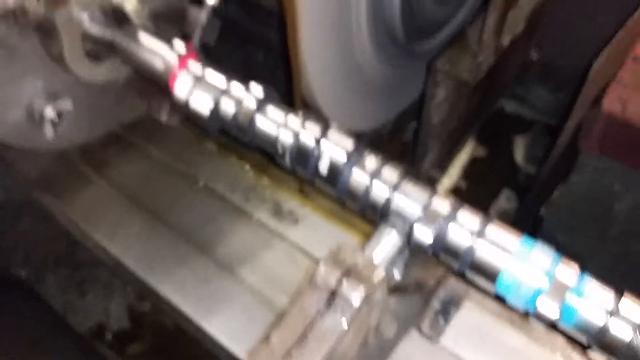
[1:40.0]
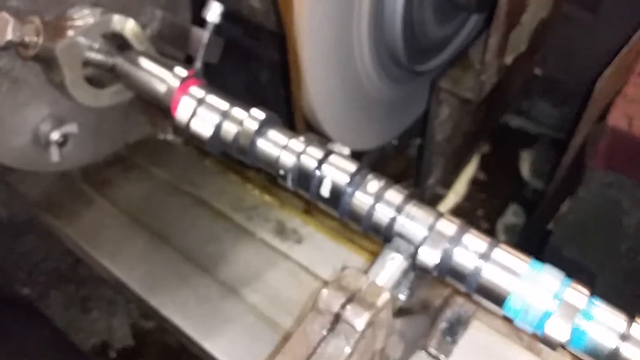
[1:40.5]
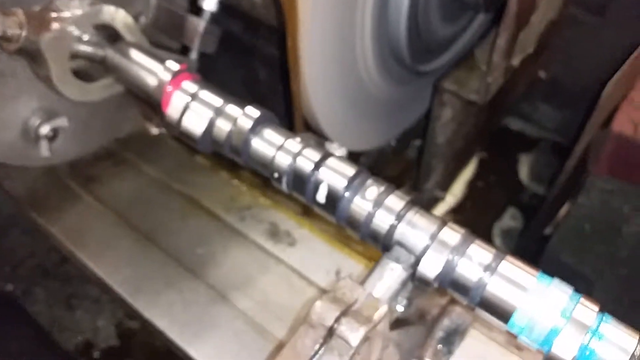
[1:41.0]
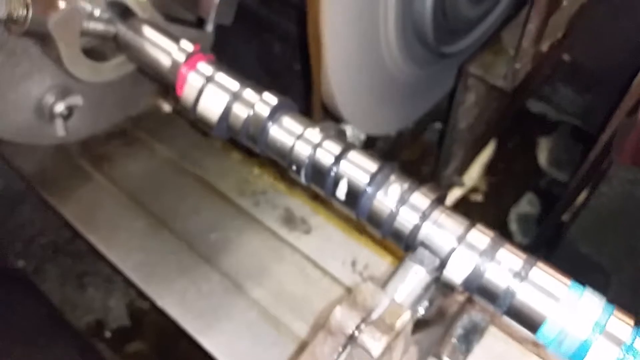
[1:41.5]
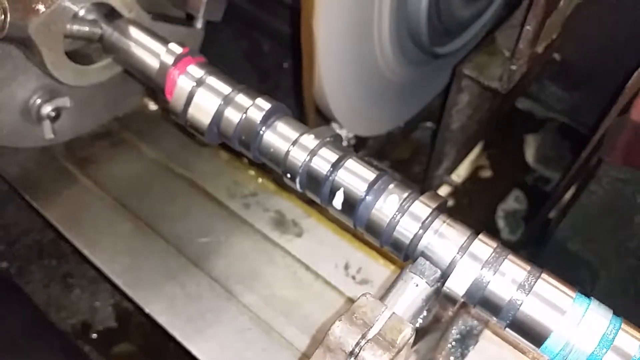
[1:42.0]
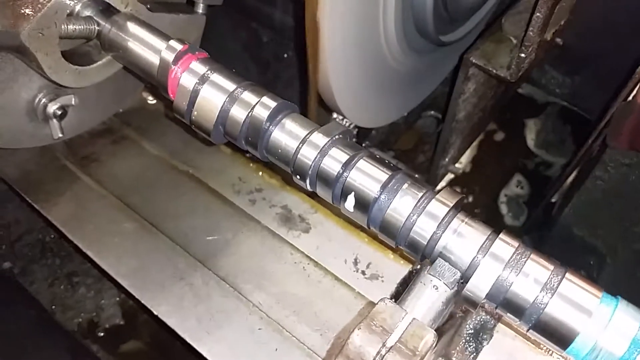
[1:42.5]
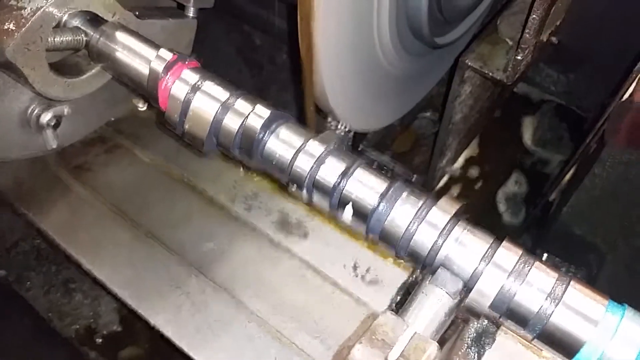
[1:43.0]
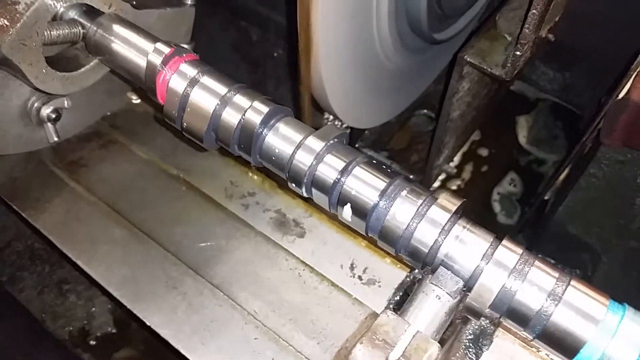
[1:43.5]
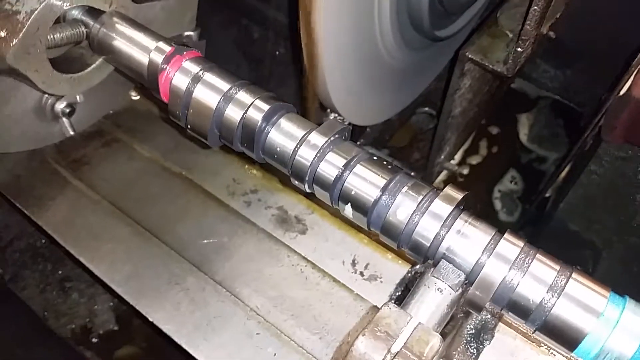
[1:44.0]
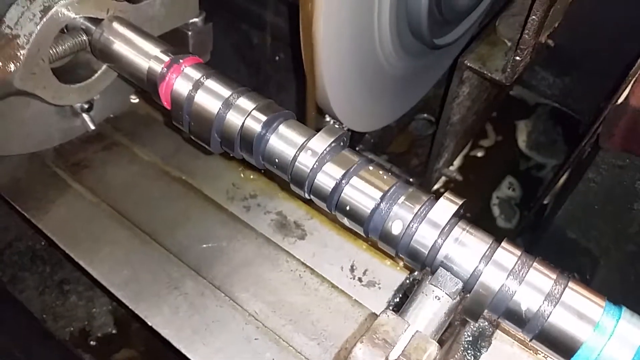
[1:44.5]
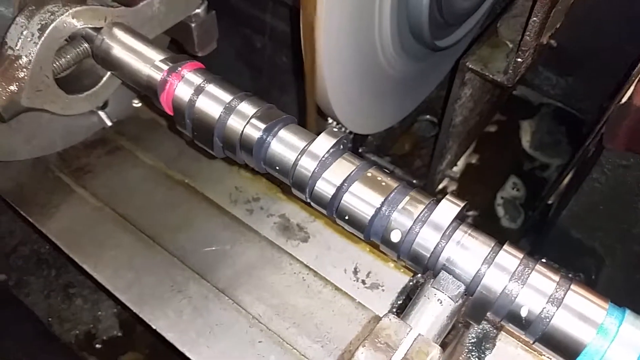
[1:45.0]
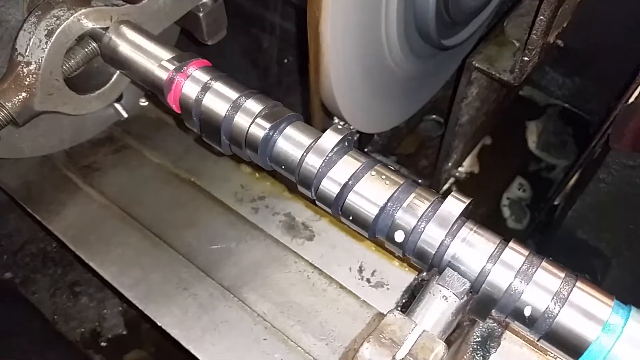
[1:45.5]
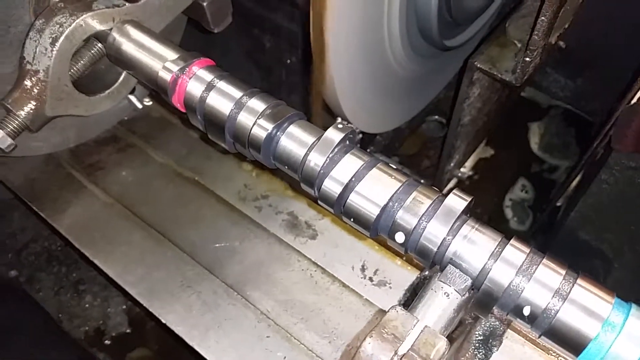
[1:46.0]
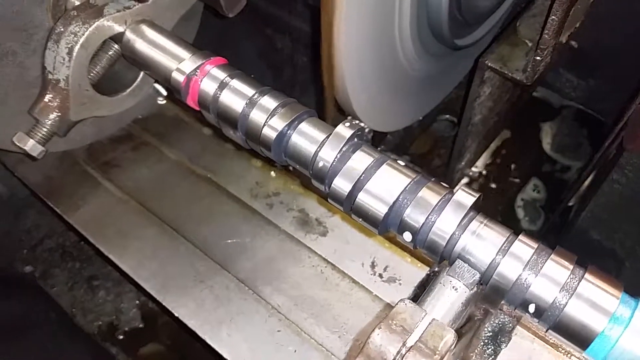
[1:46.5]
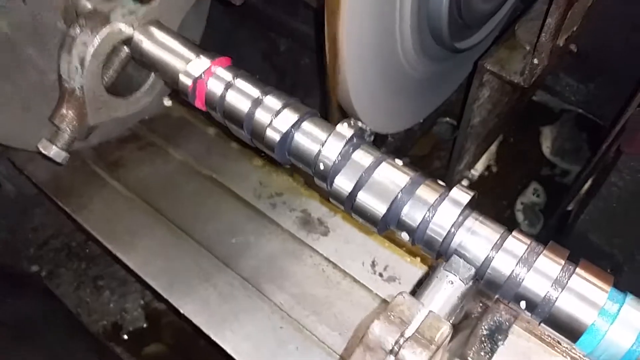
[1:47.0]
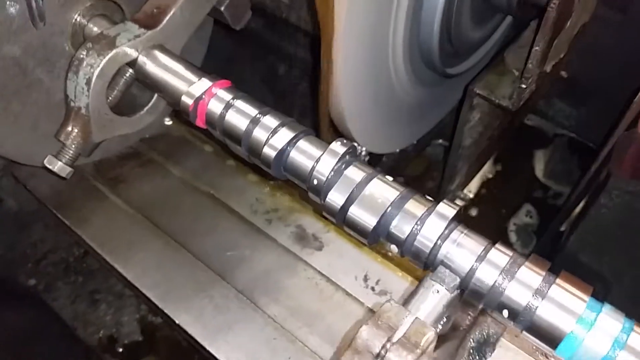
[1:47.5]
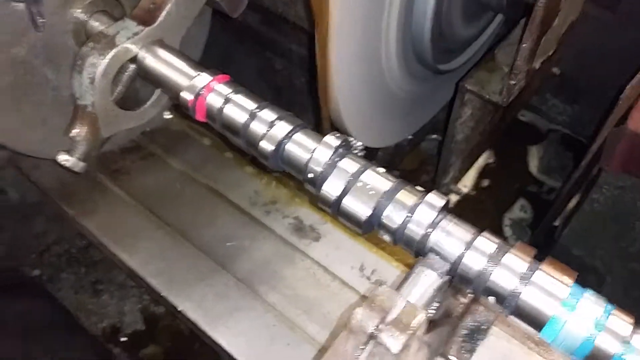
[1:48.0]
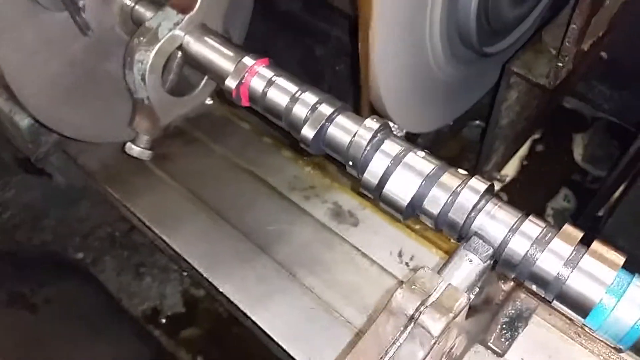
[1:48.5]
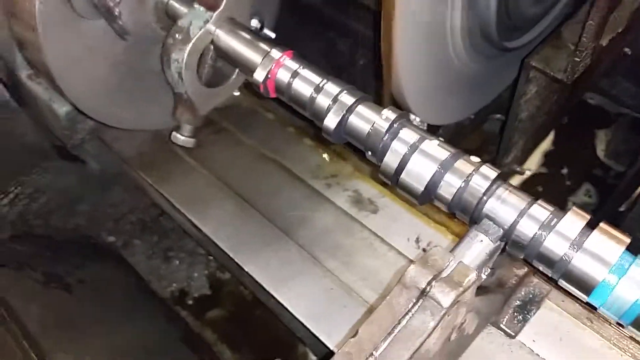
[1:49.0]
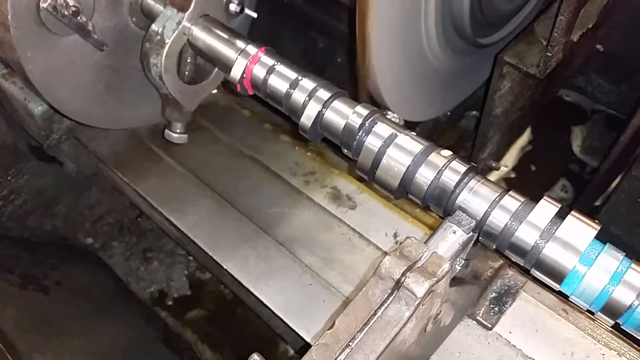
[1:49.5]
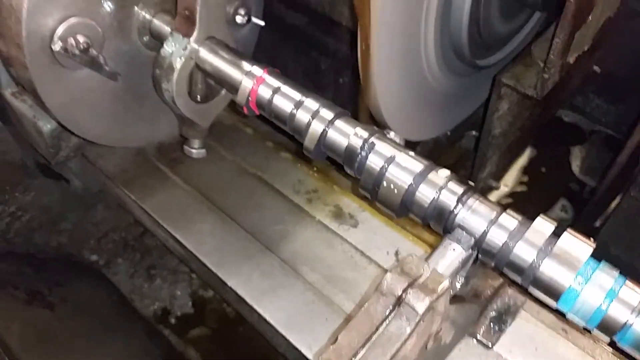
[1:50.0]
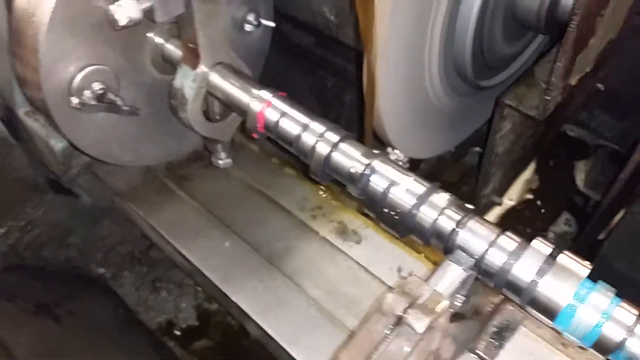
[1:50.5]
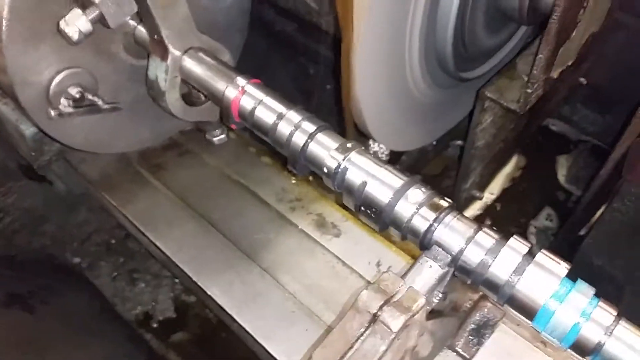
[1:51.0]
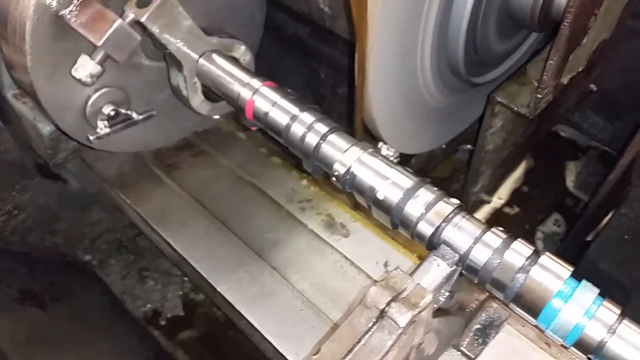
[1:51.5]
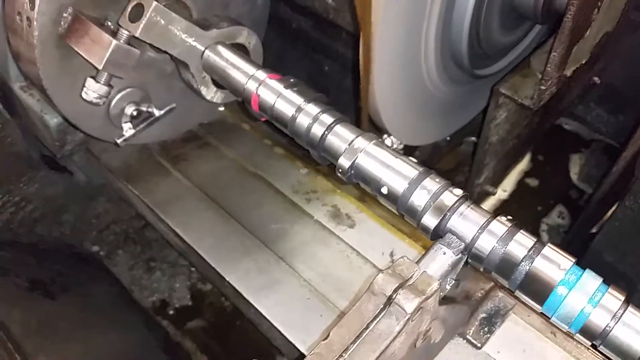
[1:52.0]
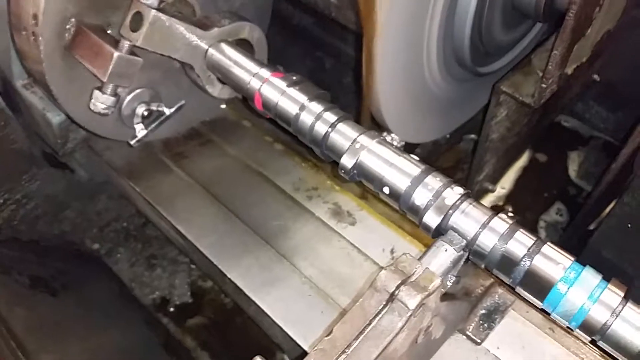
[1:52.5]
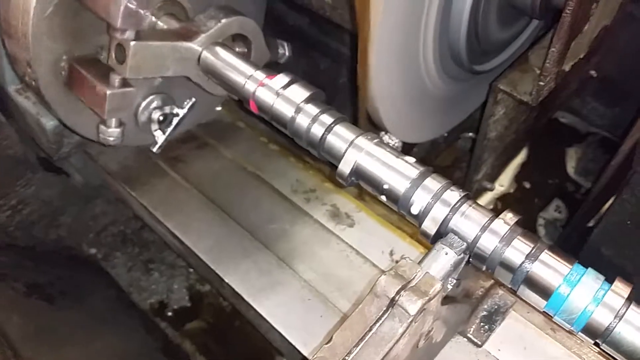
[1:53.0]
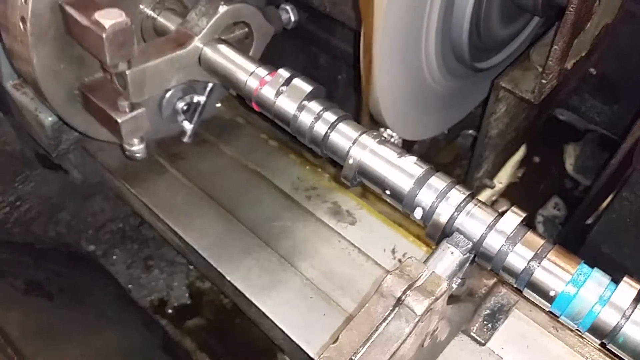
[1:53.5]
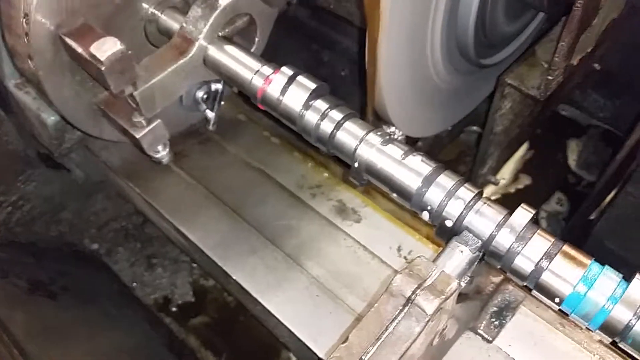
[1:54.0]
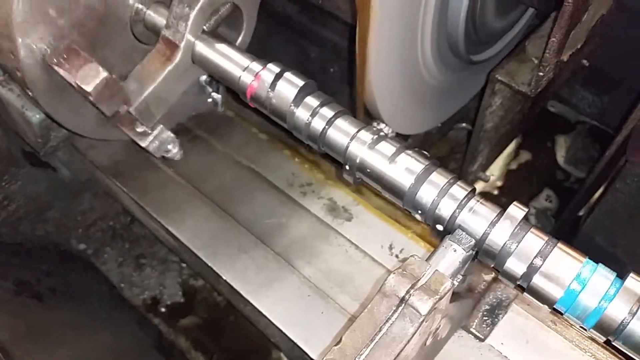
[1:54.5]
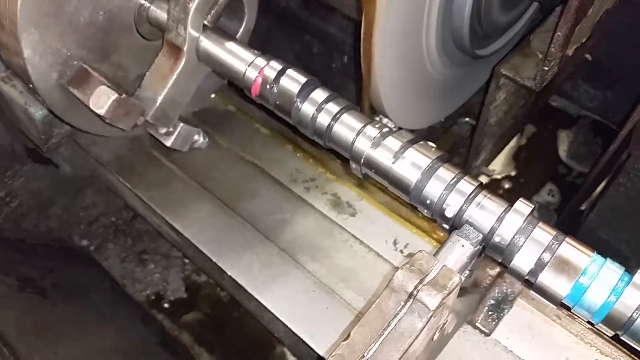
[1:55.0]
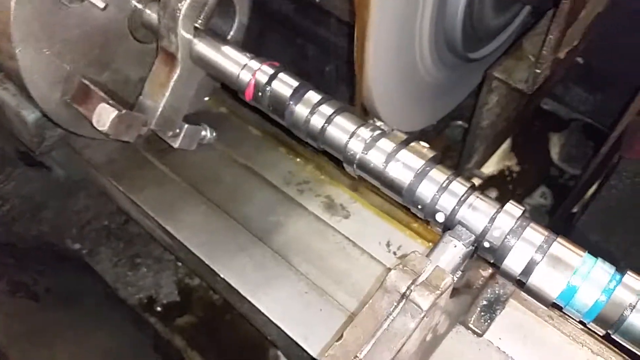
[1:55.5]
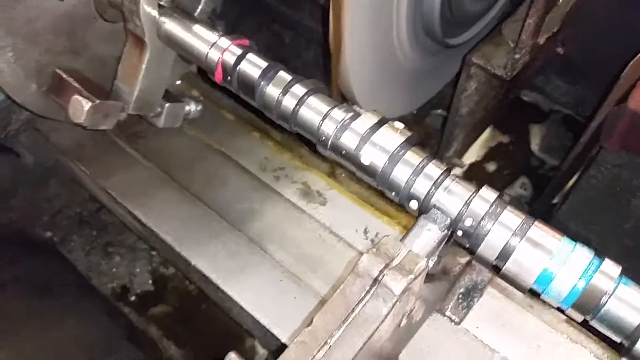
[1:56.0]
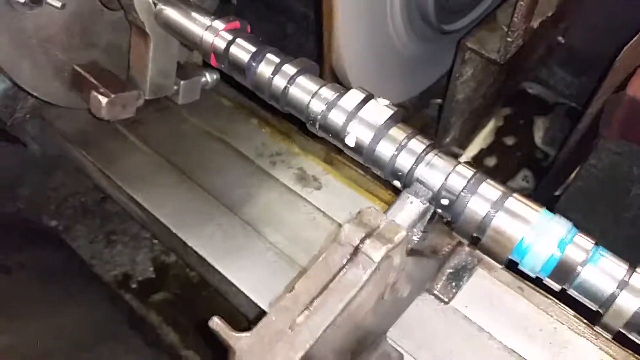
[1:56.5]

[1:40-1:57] A large amount of liquid is poured on top of the machine. The oil looks dirty, while the machine now looks very clean and is clearly different from how it looked at the beginning. The movement down below is very slow.